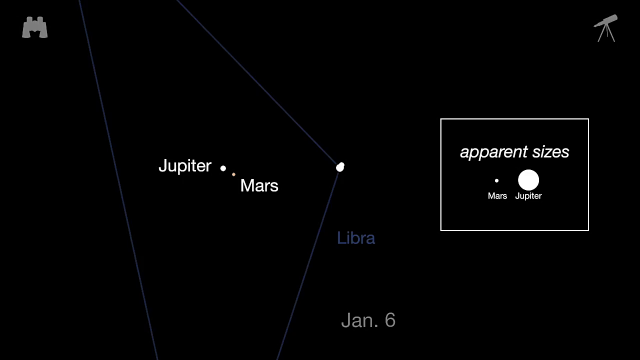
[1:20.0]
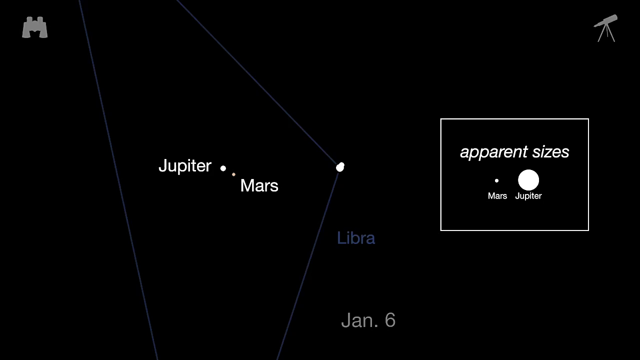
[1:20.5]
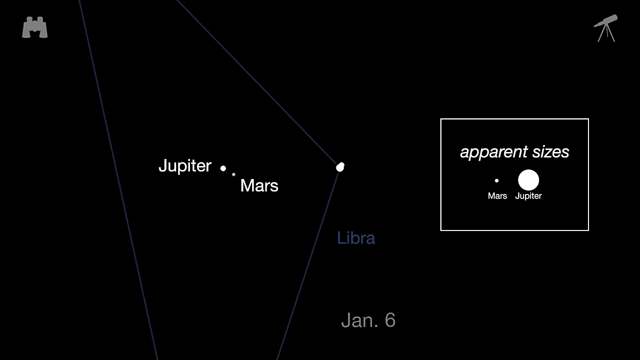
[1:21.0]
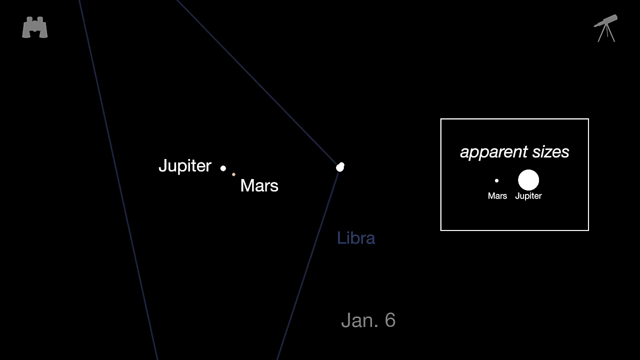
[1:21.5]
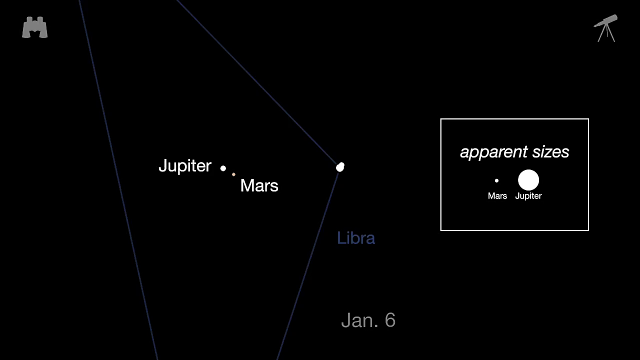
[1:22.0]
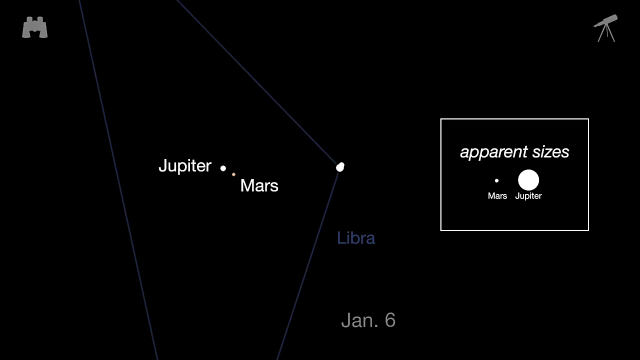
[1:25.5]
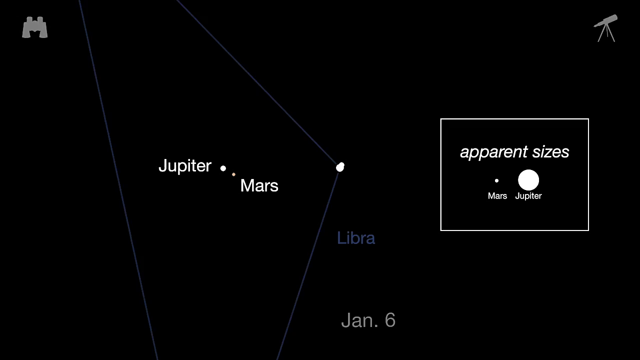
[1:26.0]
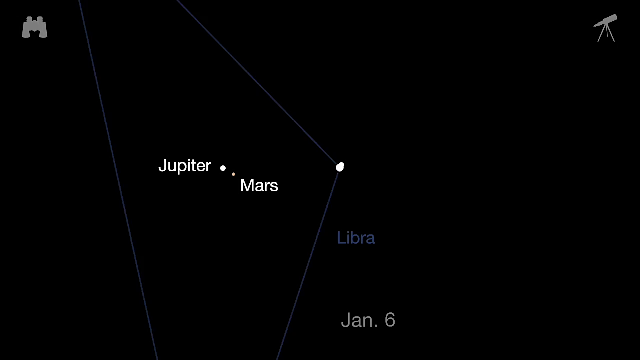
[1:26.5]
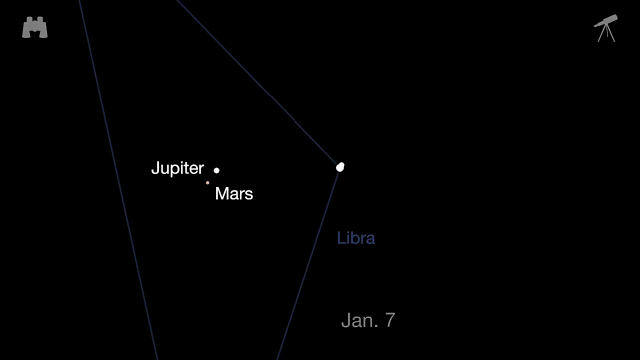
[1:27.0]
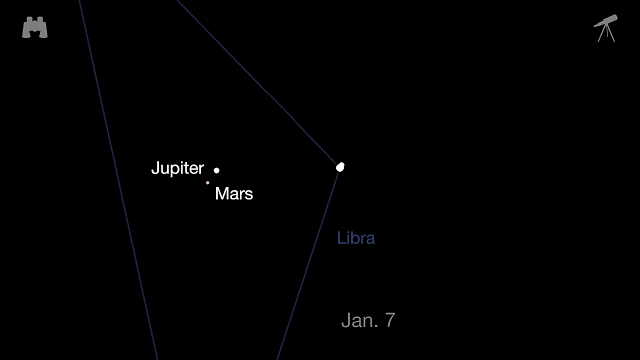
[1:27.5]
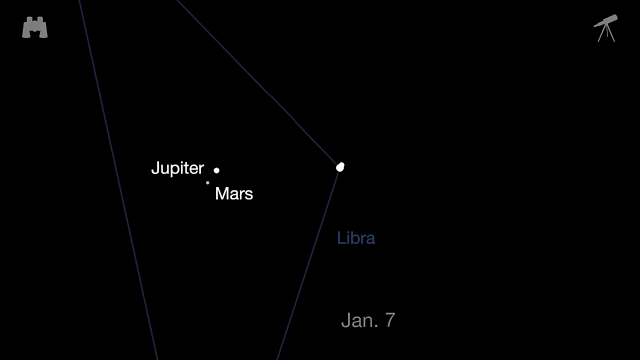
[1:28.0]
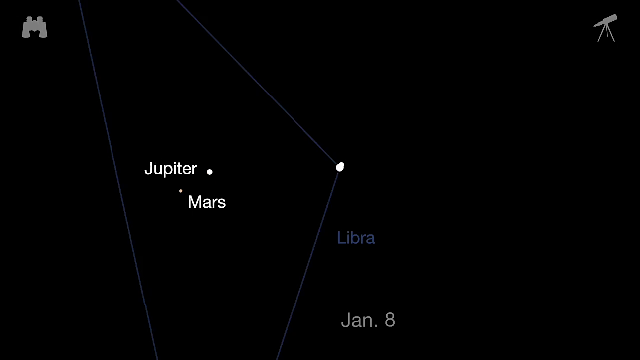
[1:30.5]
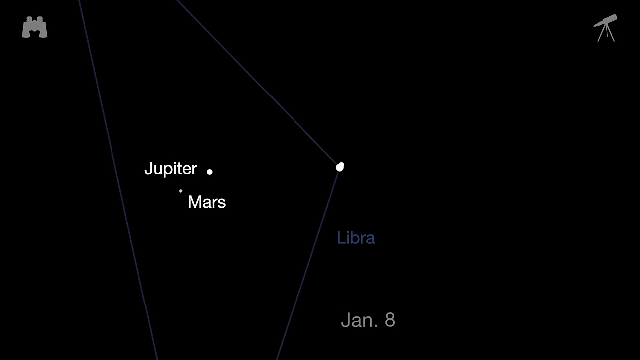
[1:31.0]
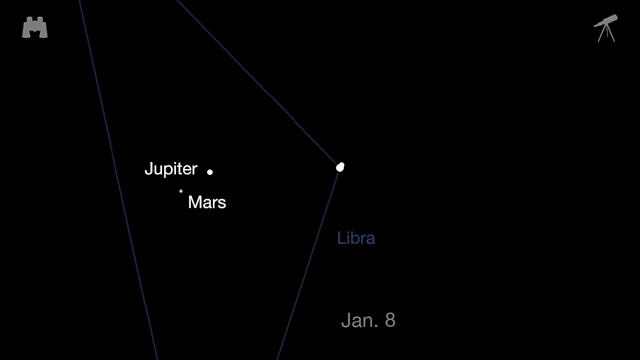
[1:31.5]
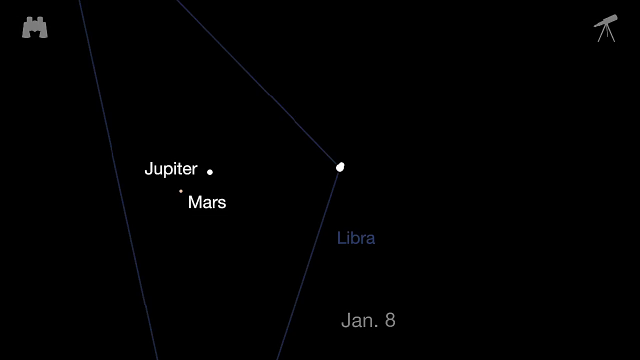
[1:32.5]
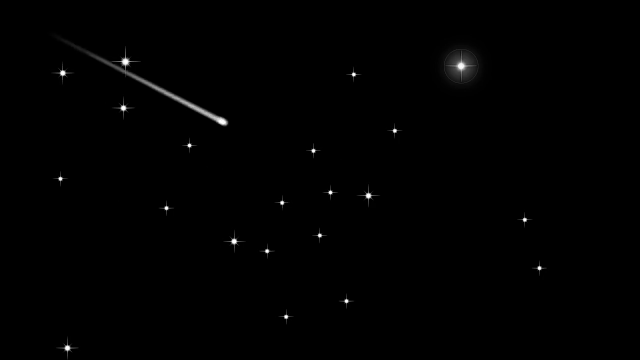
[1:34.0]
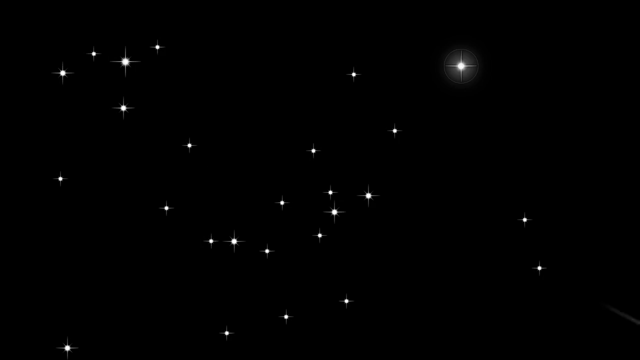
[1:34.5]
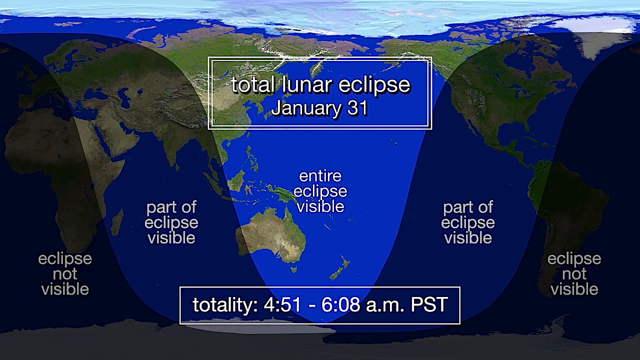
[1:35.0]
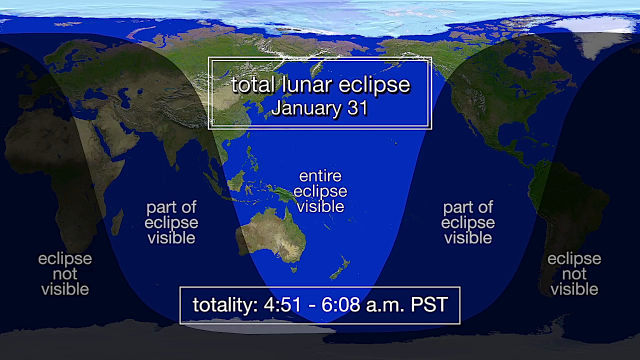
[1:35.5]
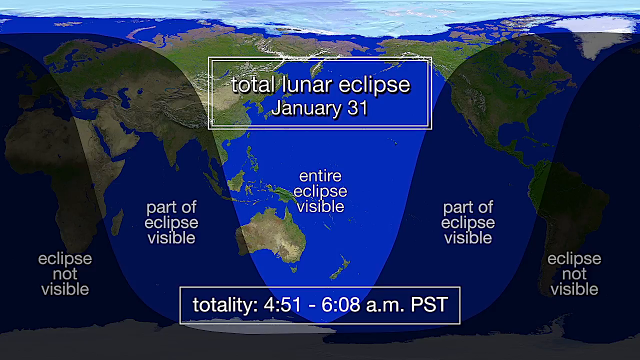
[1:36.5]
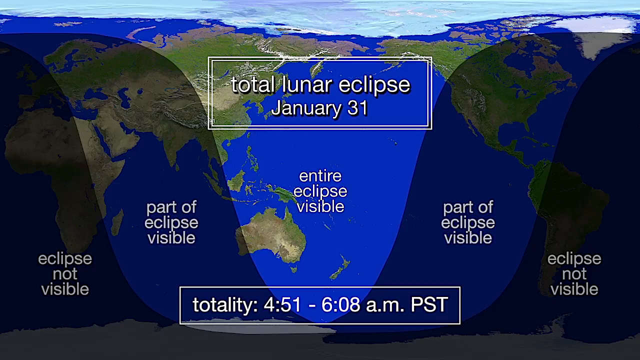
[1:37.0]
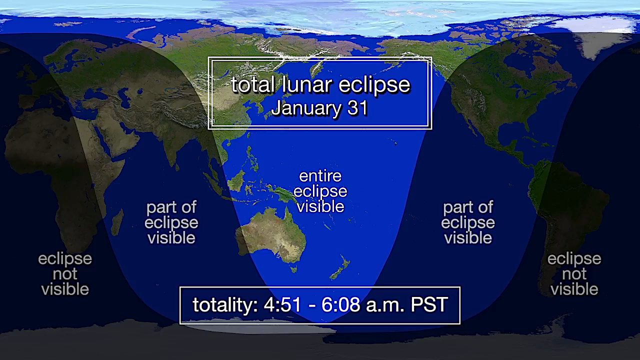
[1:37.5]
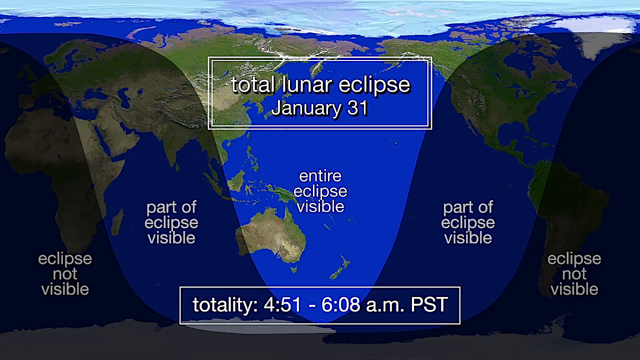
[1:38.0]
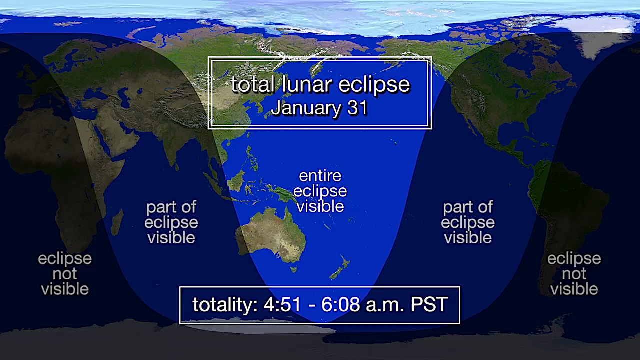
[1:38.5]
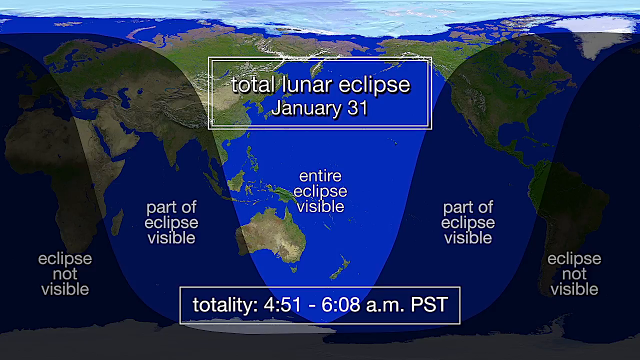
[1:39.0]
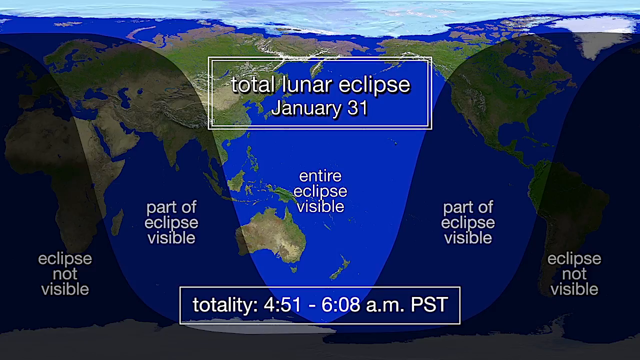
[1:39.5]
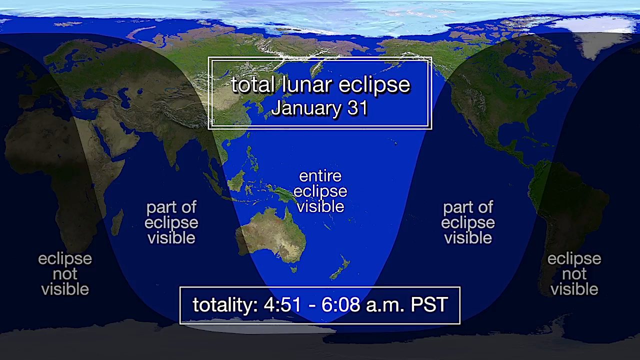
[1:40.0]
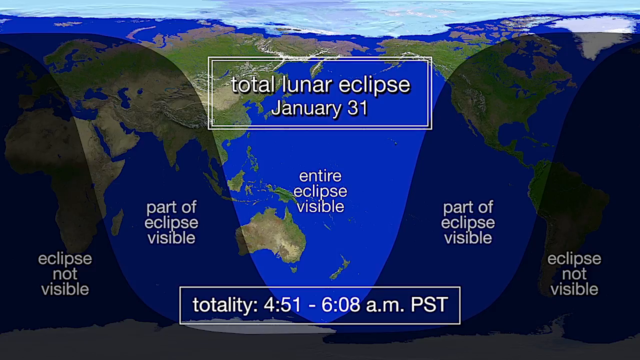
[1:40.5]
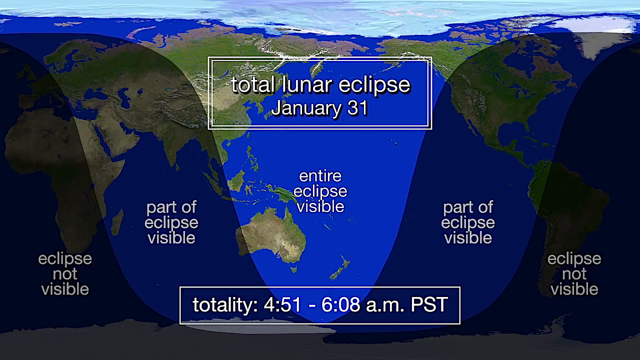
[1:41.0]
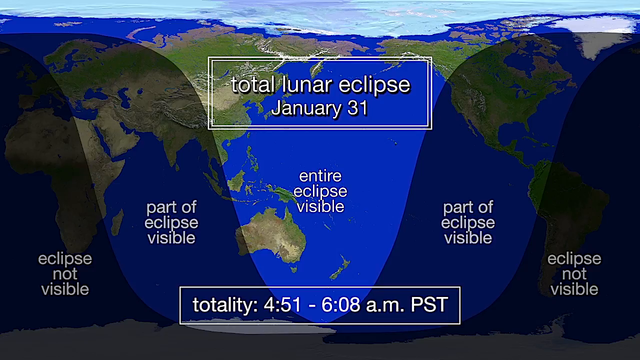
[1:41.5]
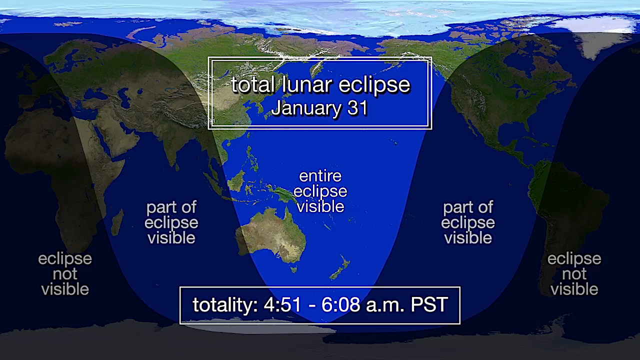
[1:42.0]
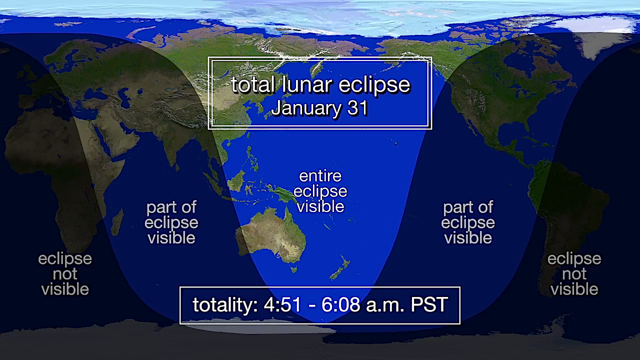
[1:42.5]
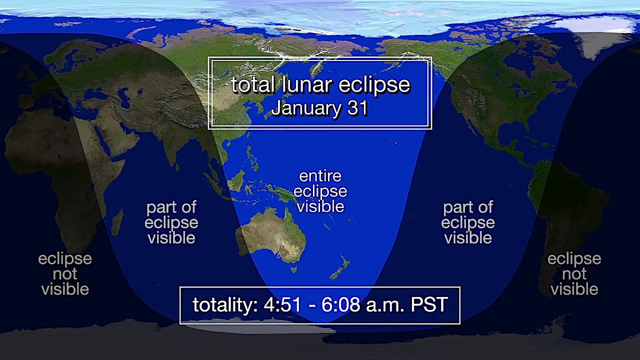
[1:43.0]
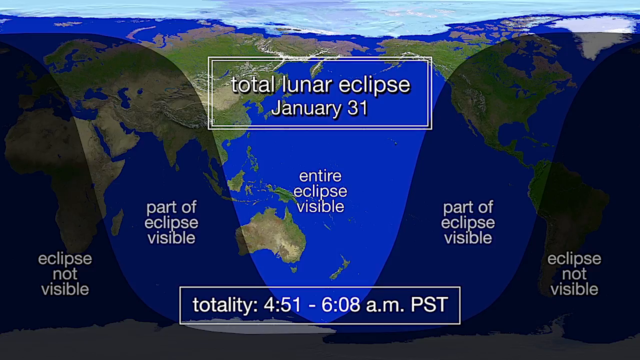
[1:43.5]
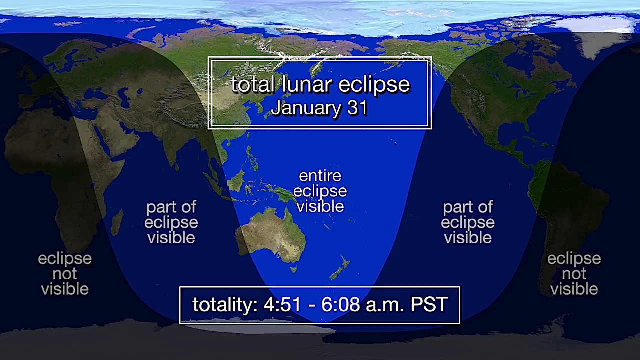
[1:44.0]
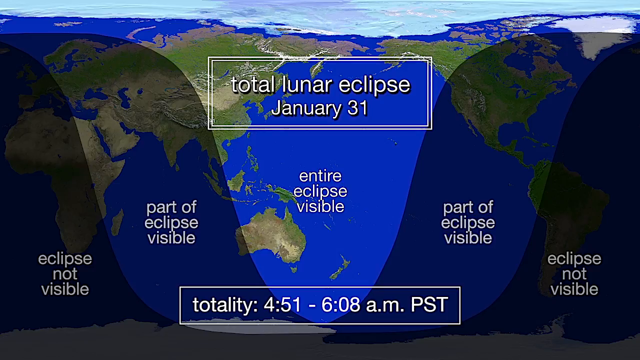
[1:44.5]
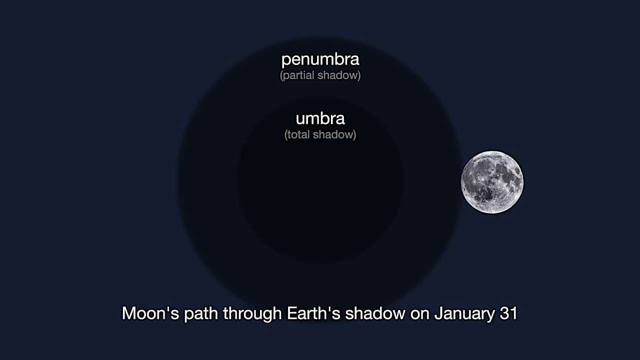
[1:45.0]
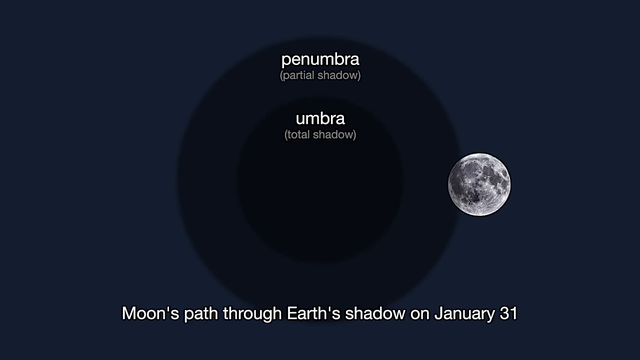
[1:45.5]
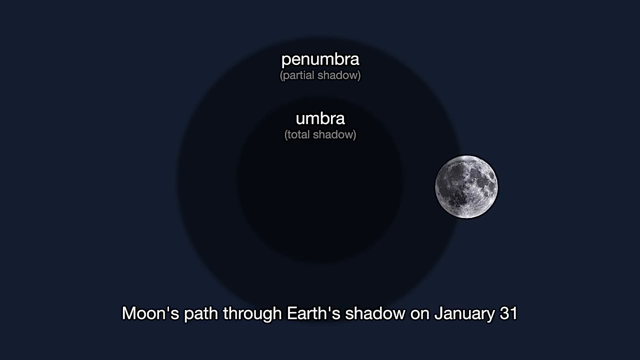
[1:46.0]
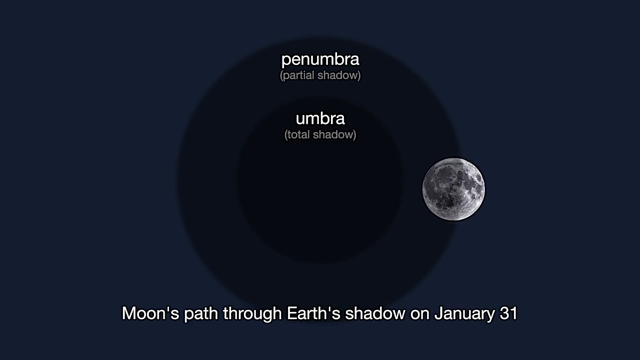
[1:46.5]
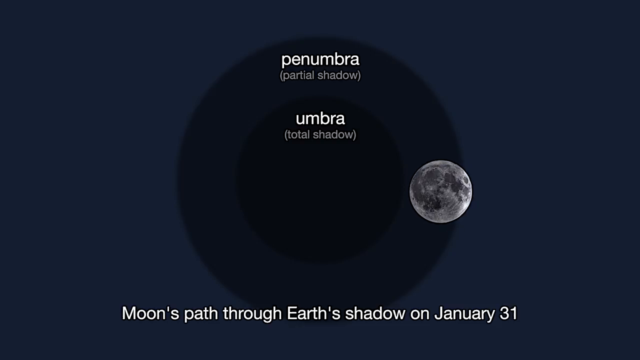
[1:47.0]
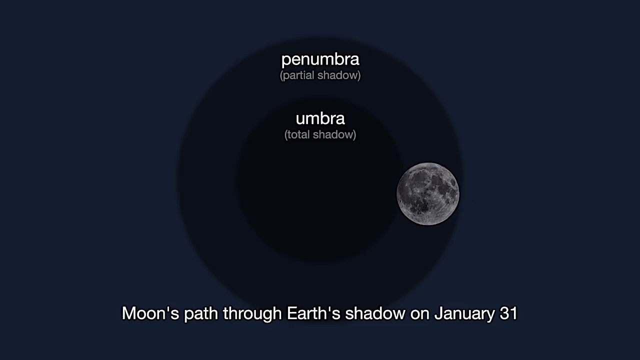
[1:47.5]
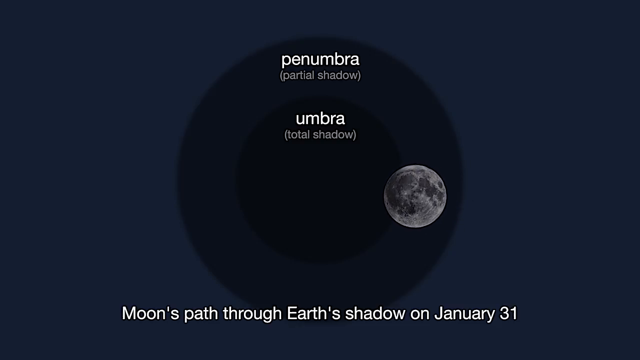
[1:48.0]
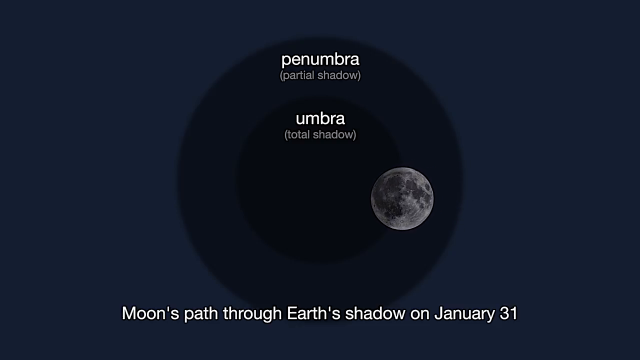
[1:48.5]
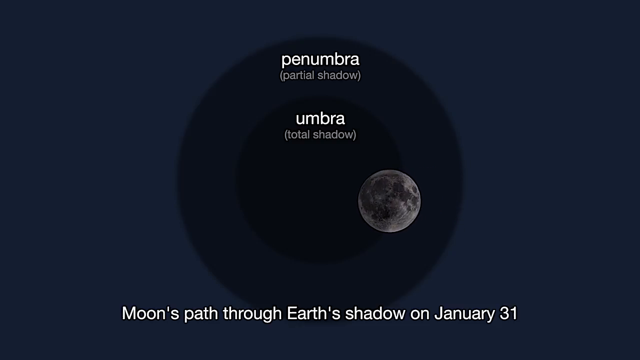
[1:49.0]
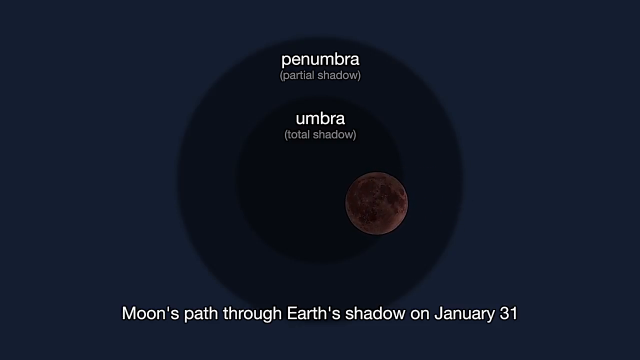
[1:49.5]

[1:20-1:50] Jupiter and Mars are in the center left of the screen, with the lines of the Libra star pattern going all the way around them. On the right part of the screen, text reads "apparent sizes," comparing Mars and Jupiter: Jupiter is shown larger than Mars on the left, and Mars larger than Jupiter on the right. The next screen says "total lunar eclipse January 31st" and shows the eclipse moving across the Earth. Another screen shows the moon moving behind, apparently, whatever is blocking it out during the eclipse. Labels indicate the eclipse is not visible on the left part of the screen, then partly visible, the entire eclipse visible in the very center, and partly visible again toward the right.